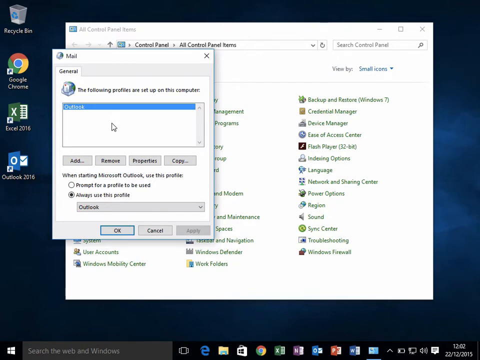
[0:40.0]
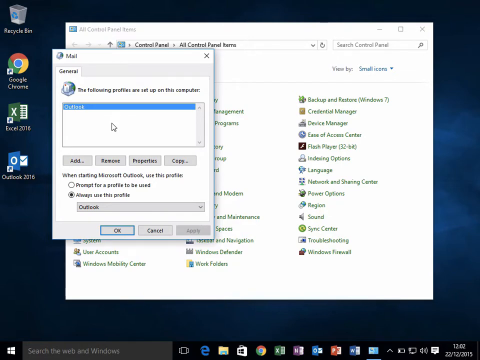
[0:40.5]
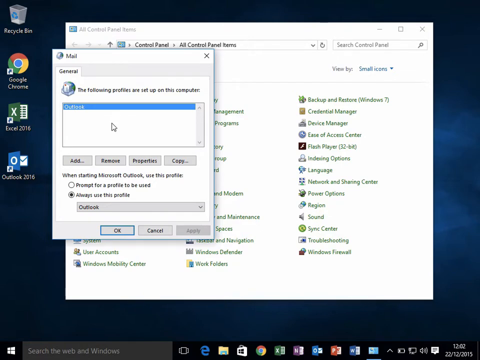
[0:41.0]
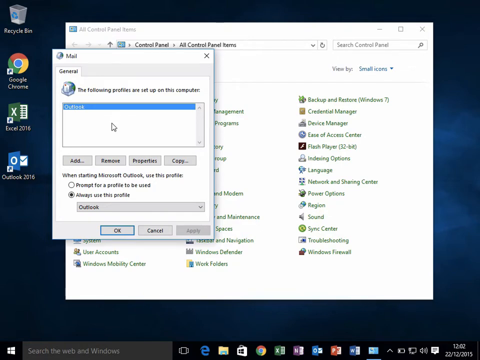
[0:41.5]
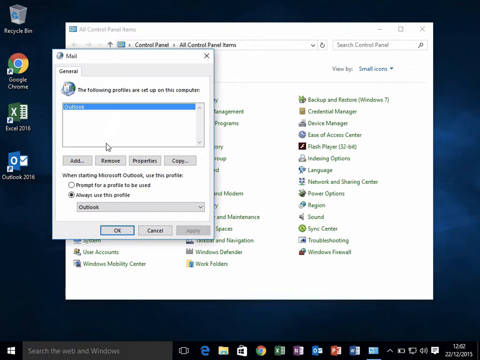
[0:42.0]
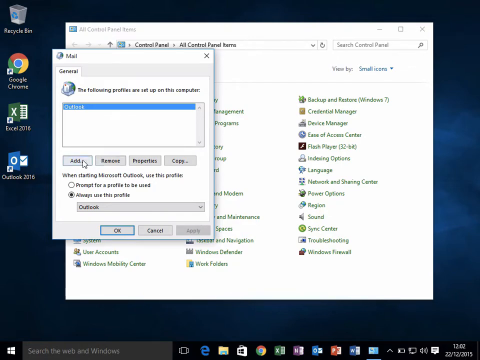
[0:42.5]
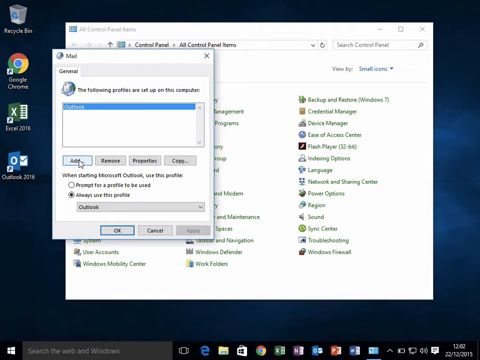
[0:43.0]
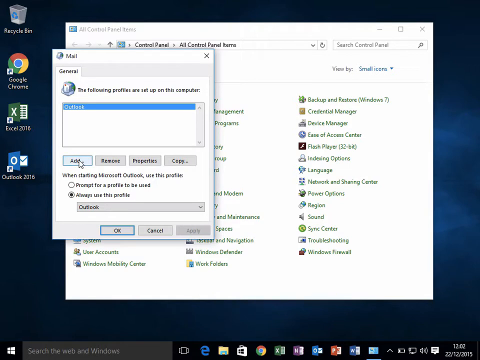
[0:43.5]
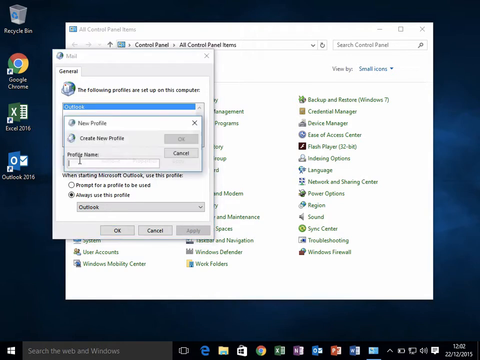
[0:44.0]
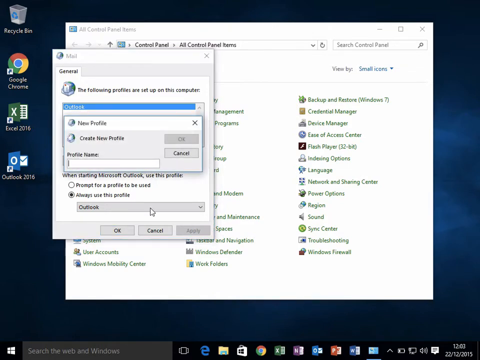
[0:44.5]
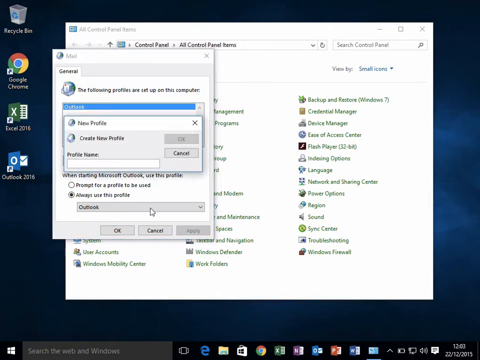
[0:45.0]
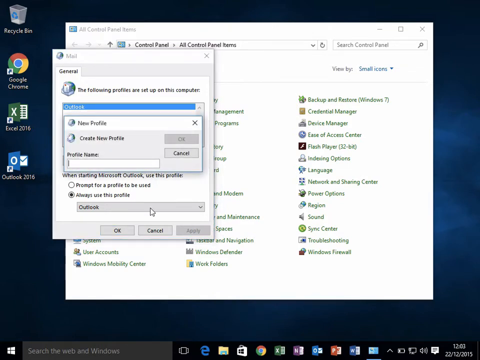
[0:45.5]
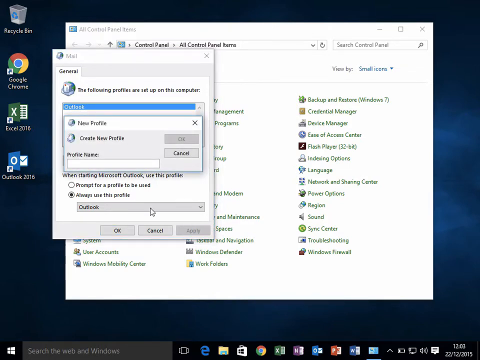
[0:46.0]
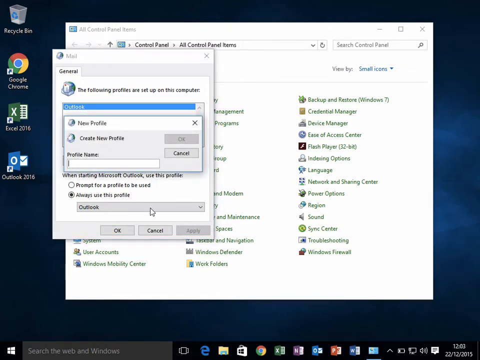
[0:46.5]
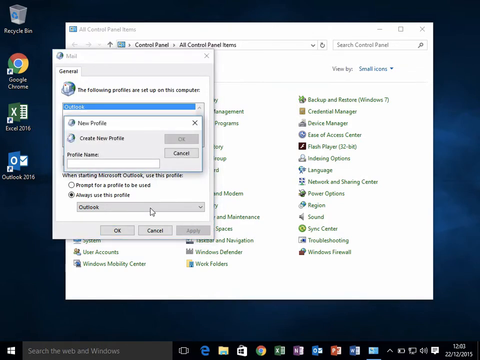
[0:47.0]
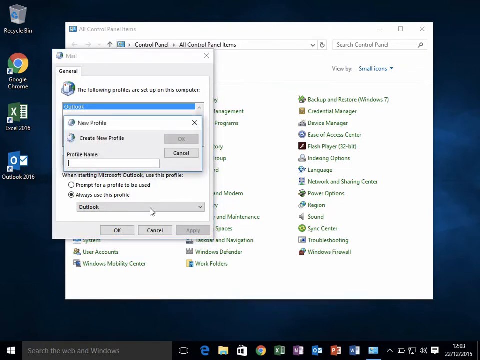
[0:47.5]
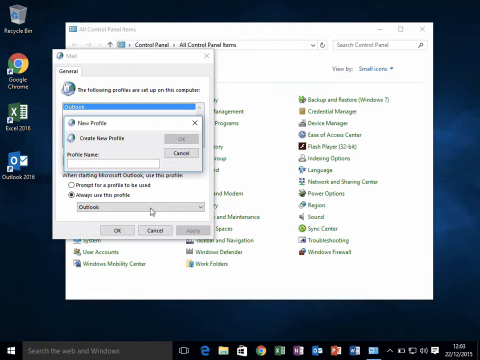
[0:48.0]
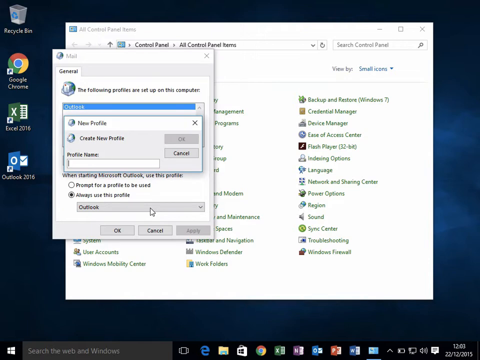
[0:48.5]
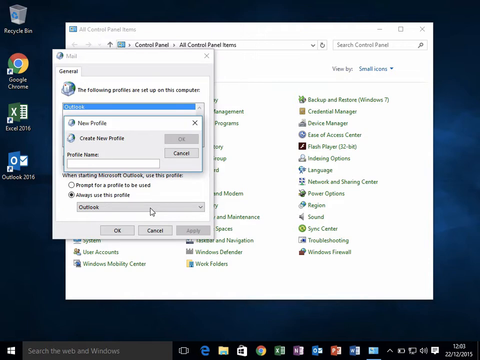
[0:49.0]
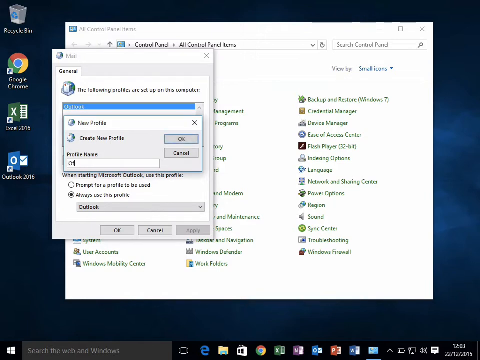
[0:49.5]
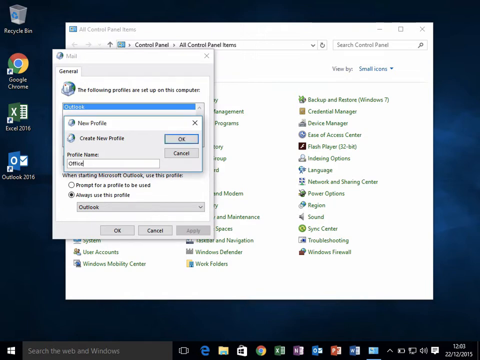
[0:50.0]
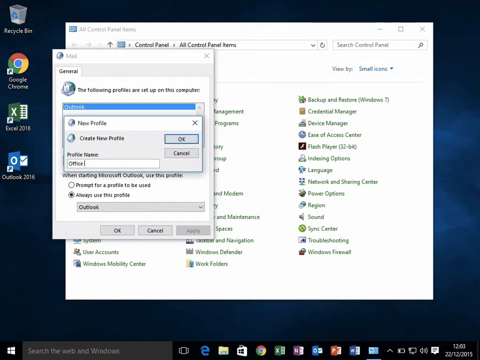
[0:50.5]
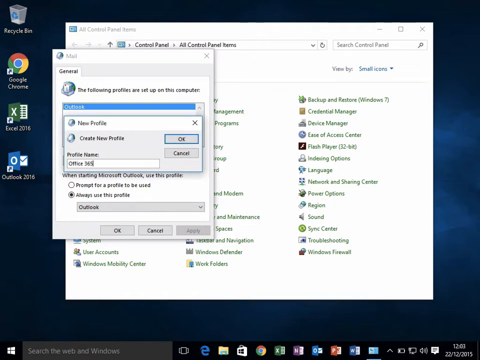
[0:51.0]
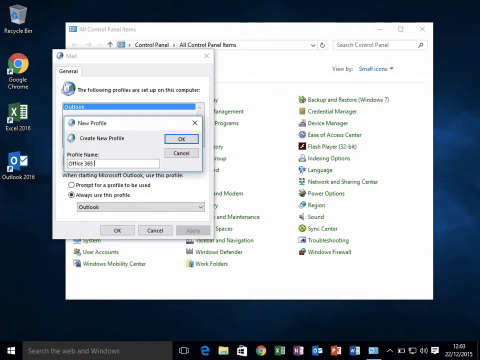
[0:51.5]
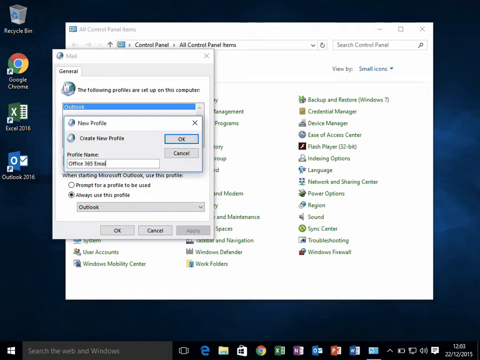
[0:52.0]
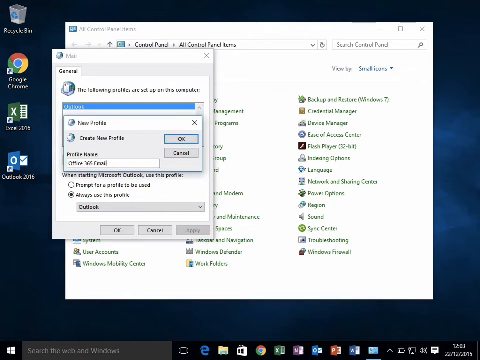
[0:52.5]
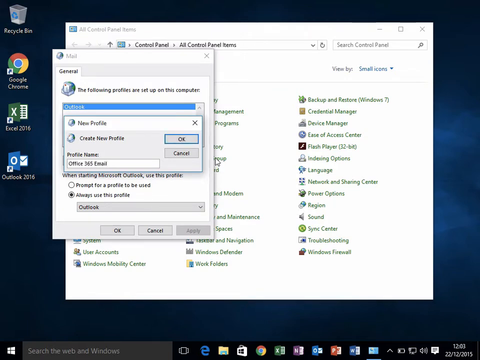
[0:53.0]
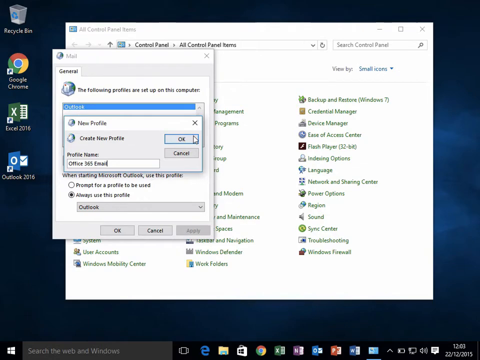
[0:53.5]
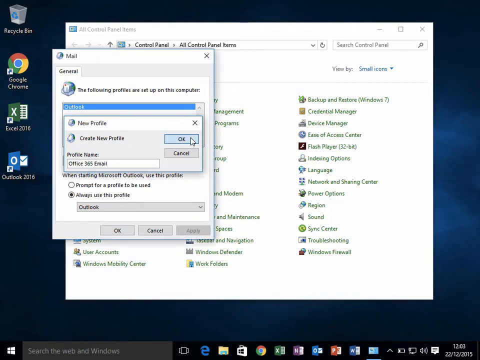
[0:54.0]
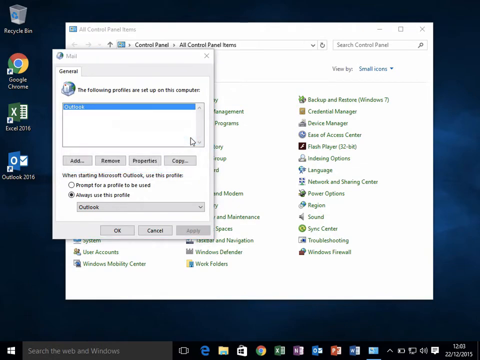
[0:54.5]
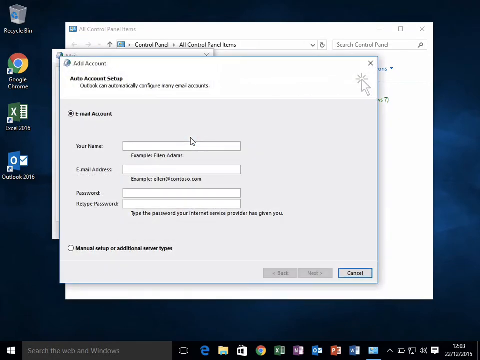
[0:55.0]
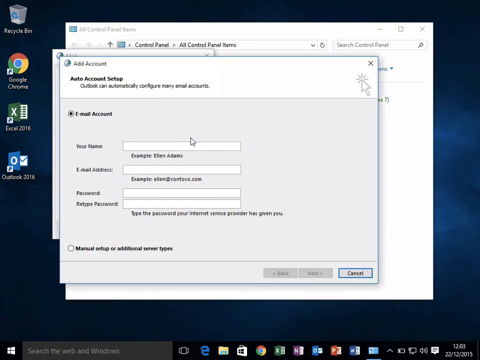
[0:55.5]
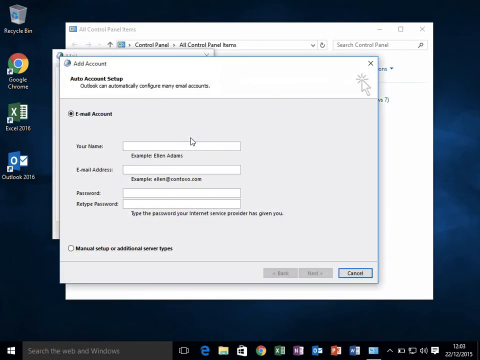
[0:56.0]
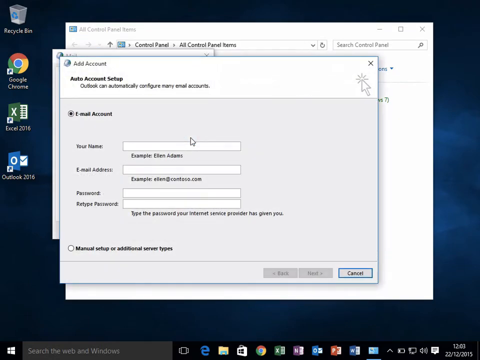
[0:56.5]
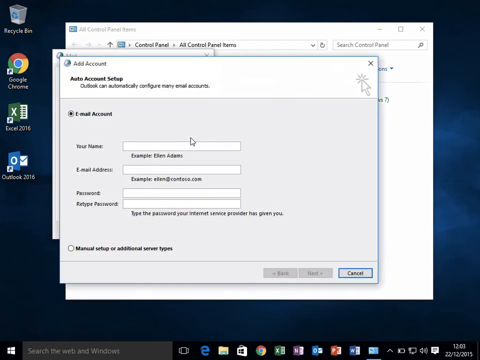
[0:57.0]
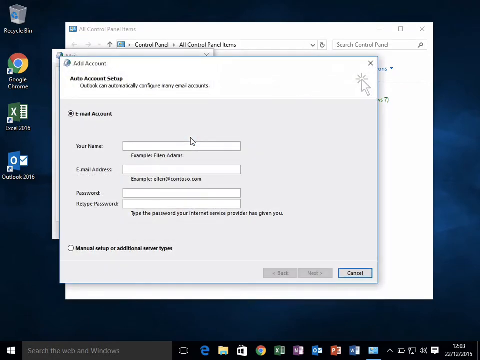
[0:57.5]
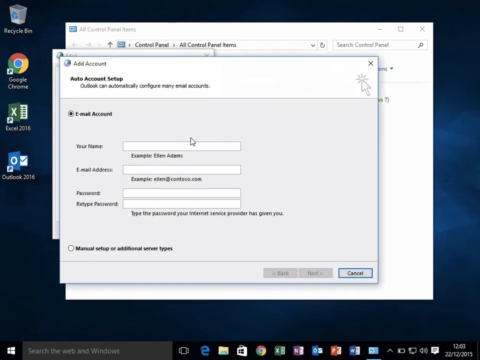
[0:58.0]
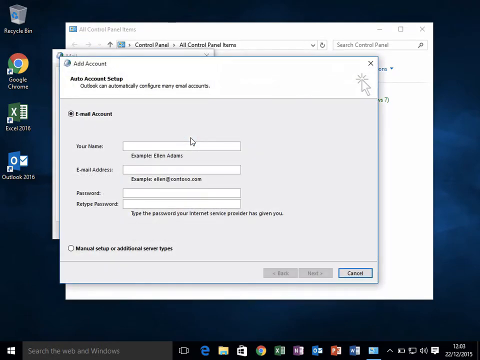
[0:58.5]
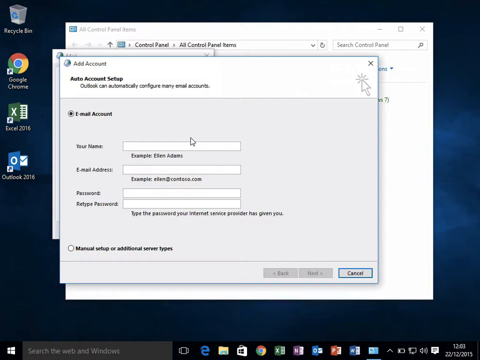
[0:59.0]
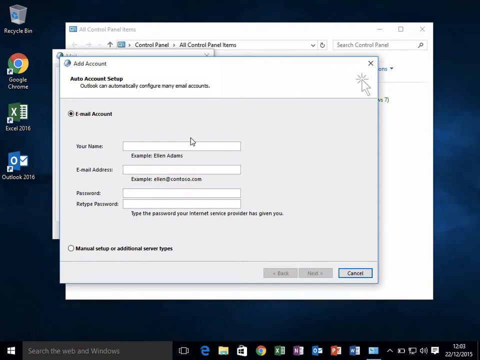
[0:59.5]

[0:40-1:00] The mouse cursor moves downward and to the left, and the user clicks an add button. A small rectangular window titled "New Profile" opens, containing a text box with a blinking cursor, and the user types "Office 365 email" into it. The pointer moves to the right and clicks the OK button. Another window pops up with "Add Account" in its top left corner. It has four blank text boxes: one for a name, one for an email address, one for a password, and one to retype the password. A cancel button is in the bottom right corner.